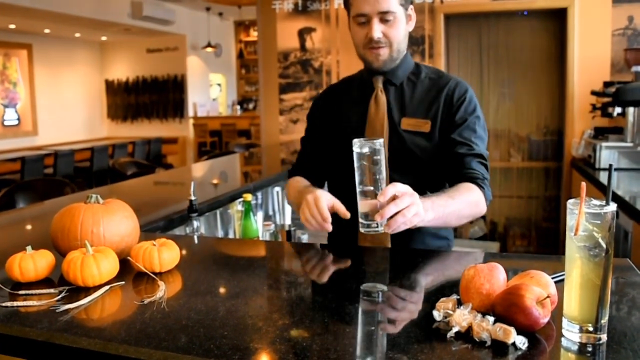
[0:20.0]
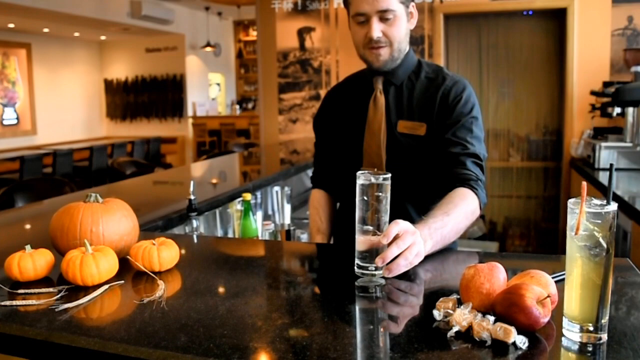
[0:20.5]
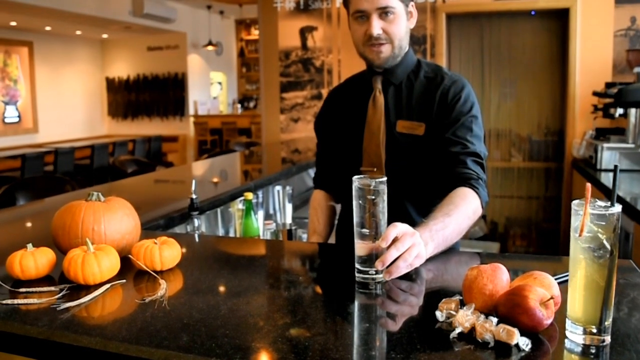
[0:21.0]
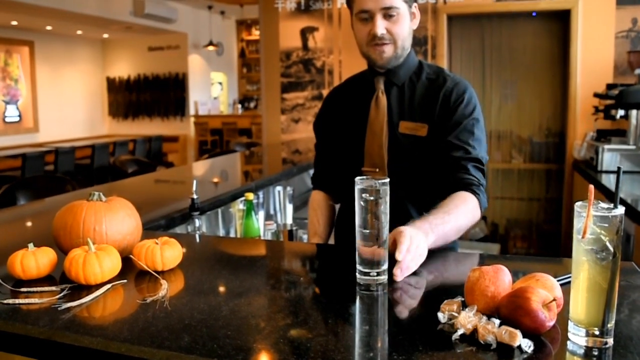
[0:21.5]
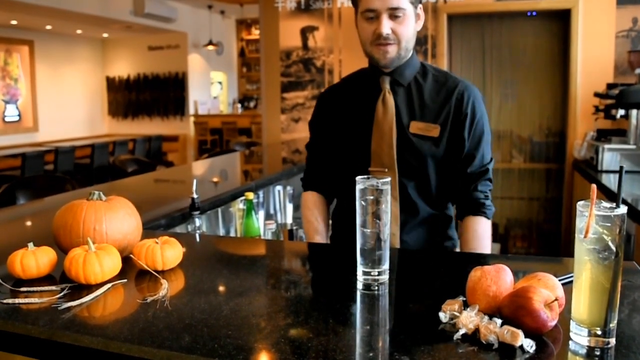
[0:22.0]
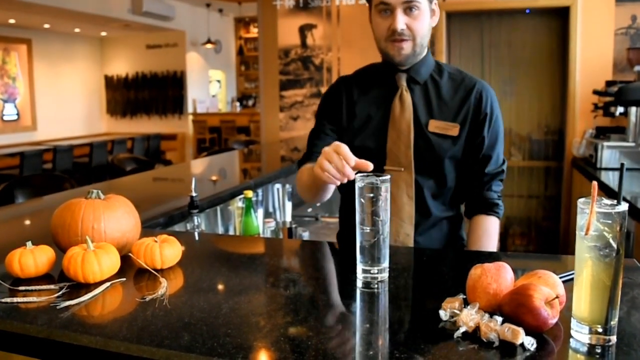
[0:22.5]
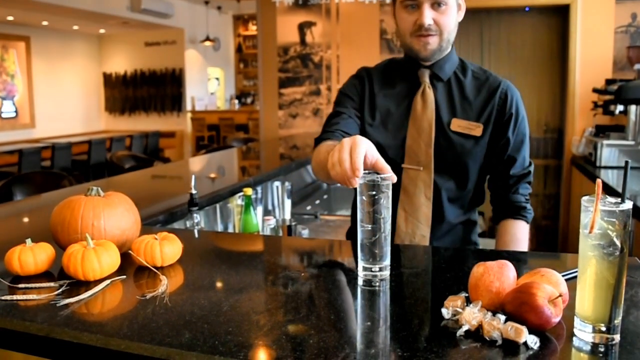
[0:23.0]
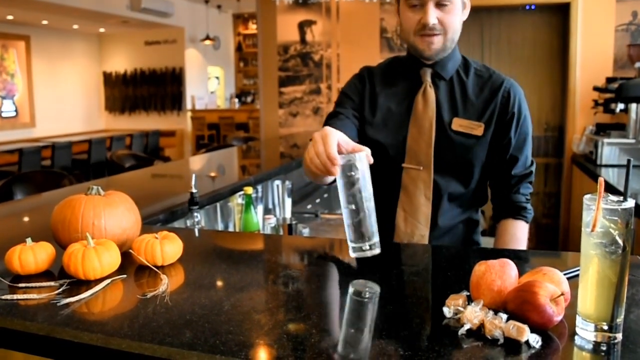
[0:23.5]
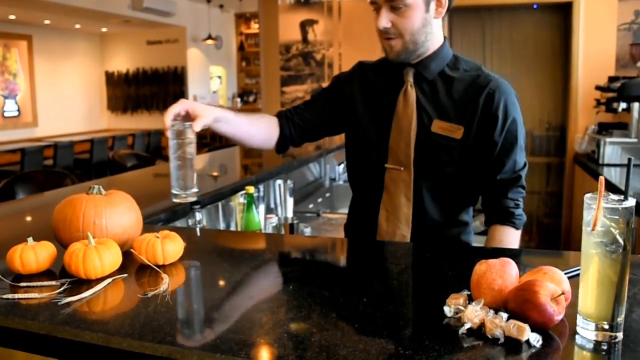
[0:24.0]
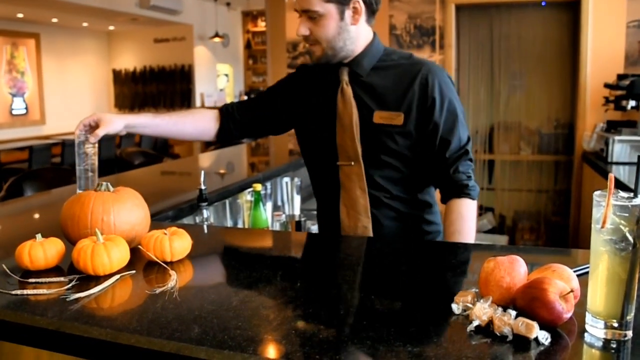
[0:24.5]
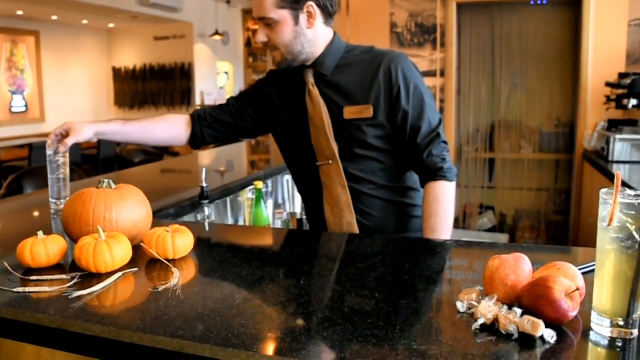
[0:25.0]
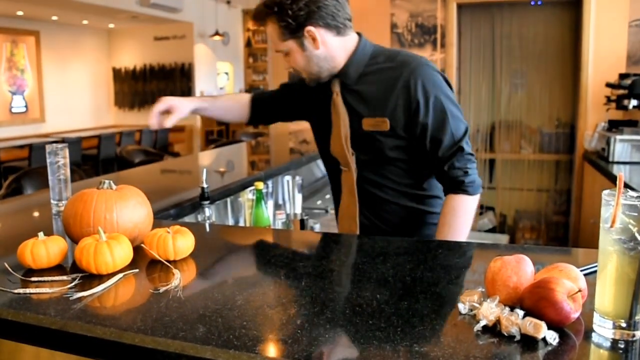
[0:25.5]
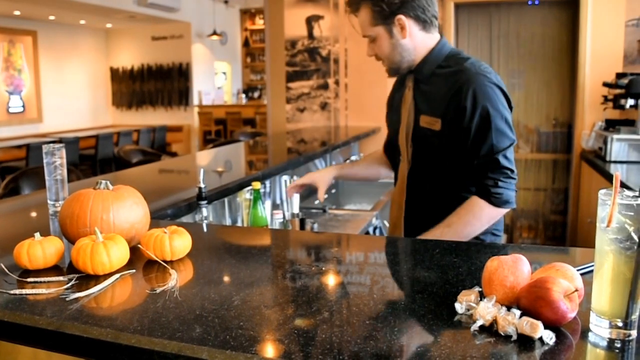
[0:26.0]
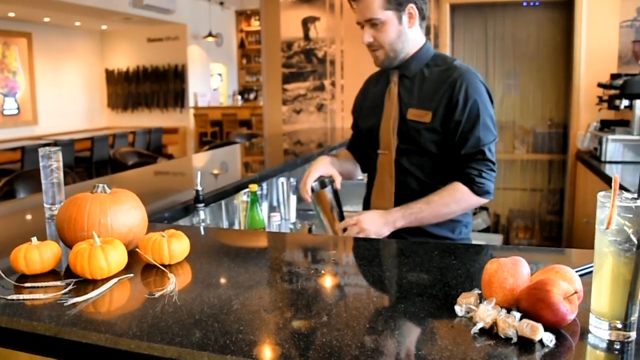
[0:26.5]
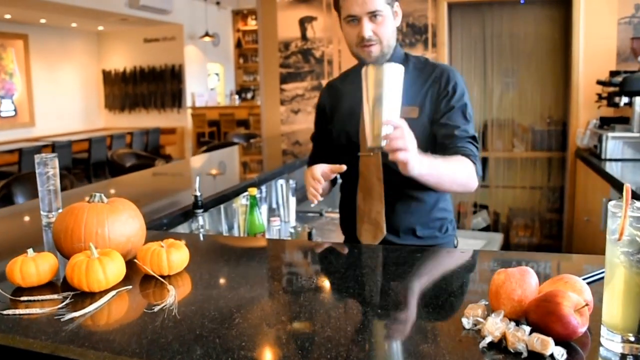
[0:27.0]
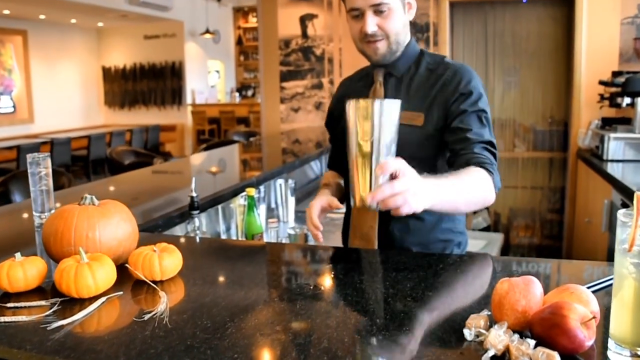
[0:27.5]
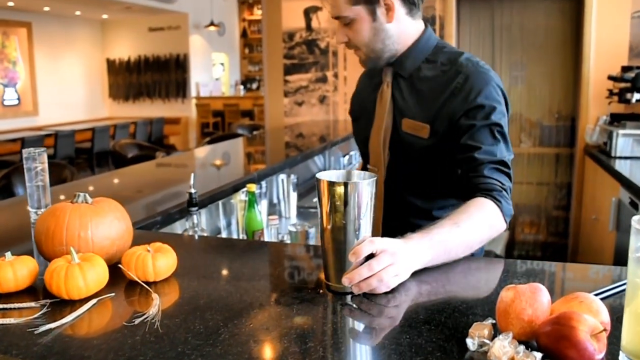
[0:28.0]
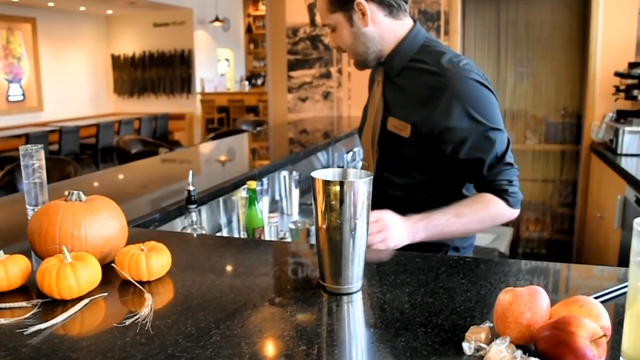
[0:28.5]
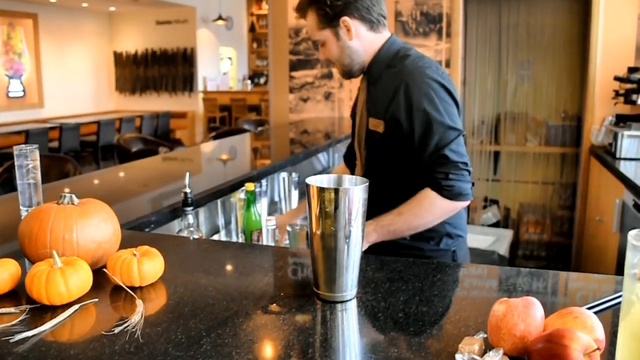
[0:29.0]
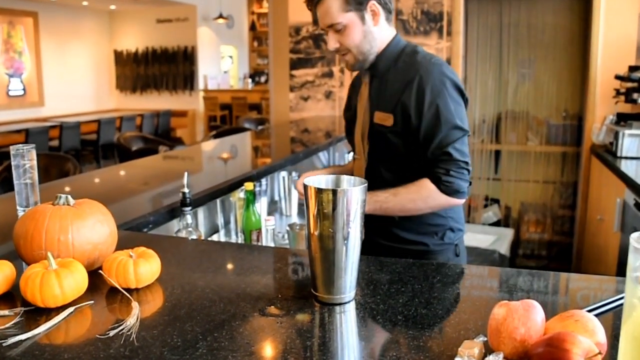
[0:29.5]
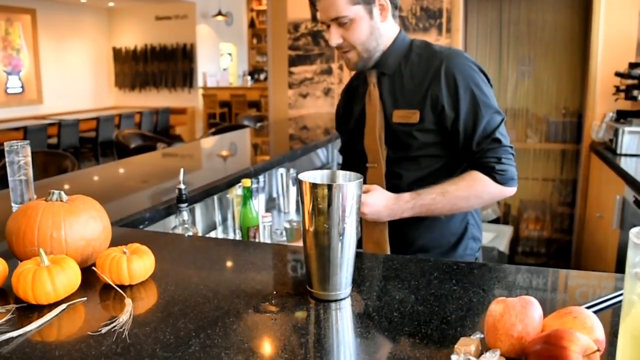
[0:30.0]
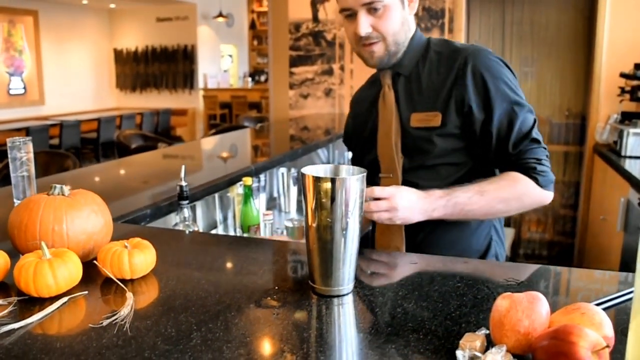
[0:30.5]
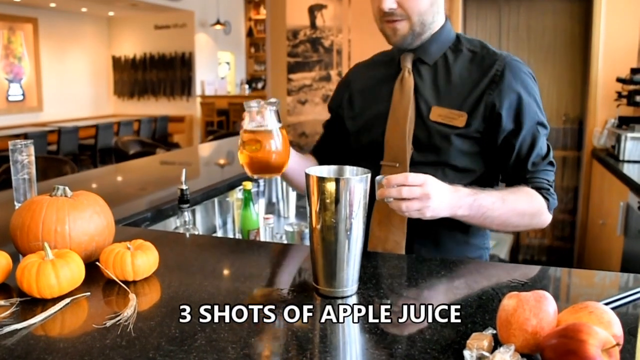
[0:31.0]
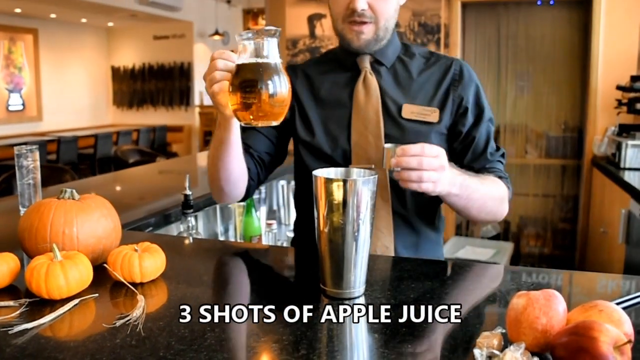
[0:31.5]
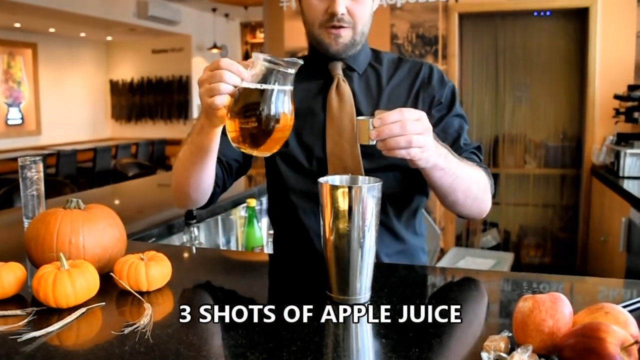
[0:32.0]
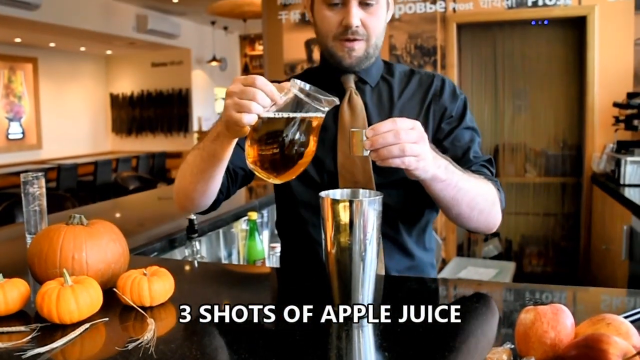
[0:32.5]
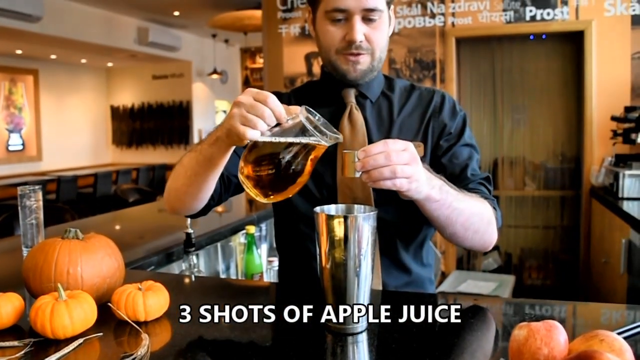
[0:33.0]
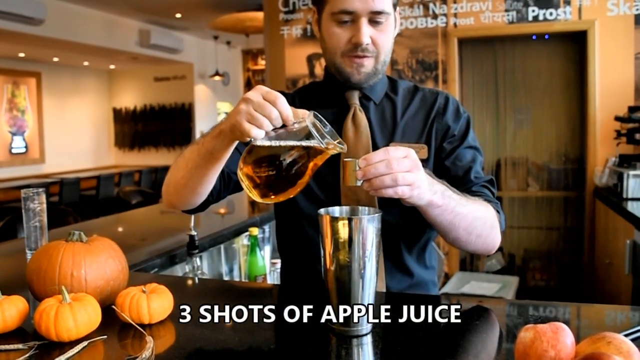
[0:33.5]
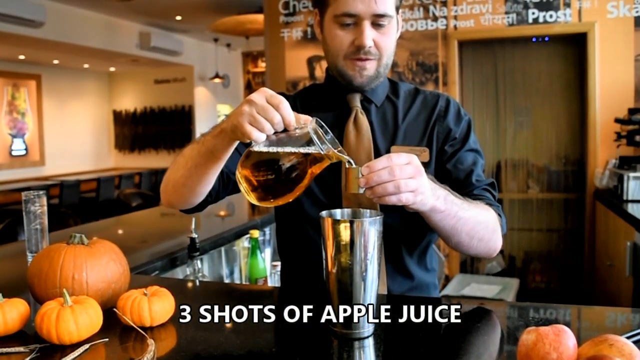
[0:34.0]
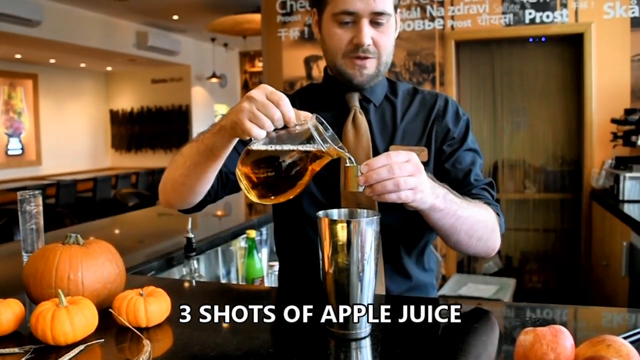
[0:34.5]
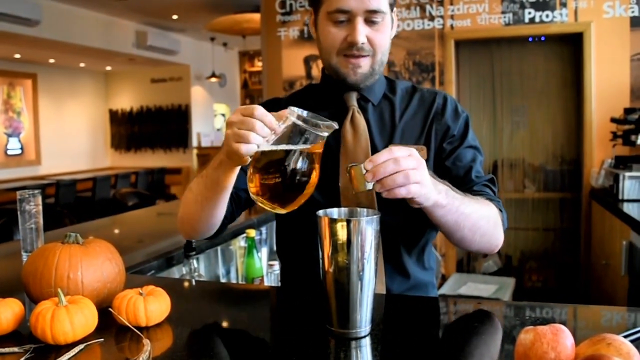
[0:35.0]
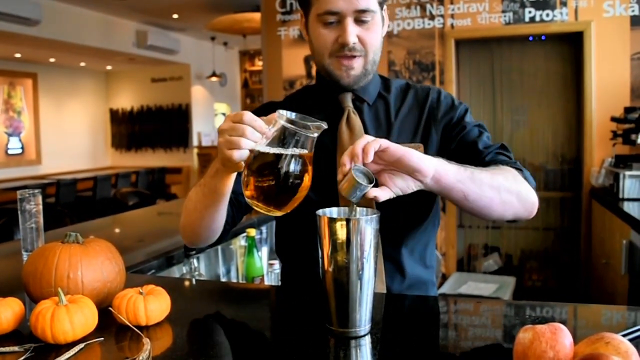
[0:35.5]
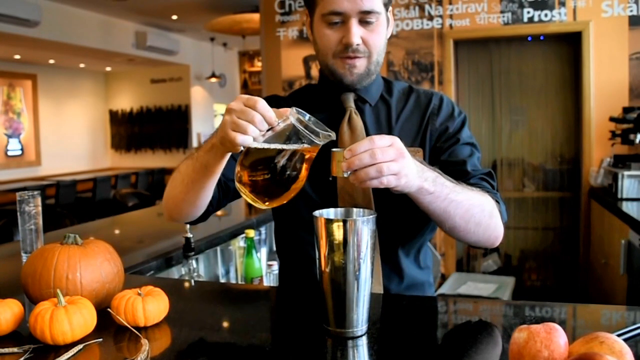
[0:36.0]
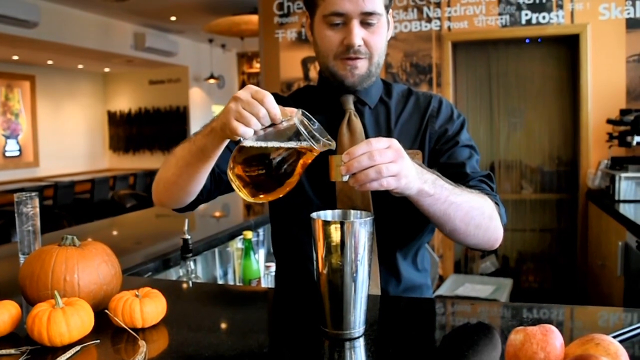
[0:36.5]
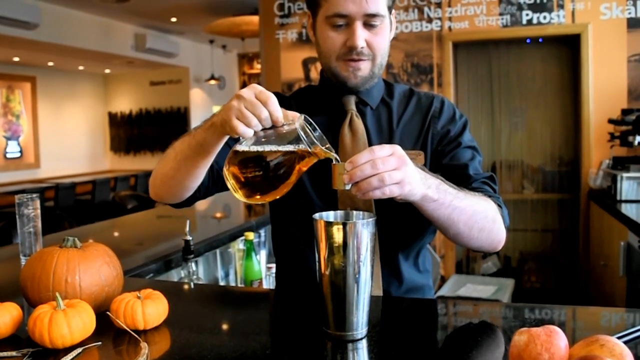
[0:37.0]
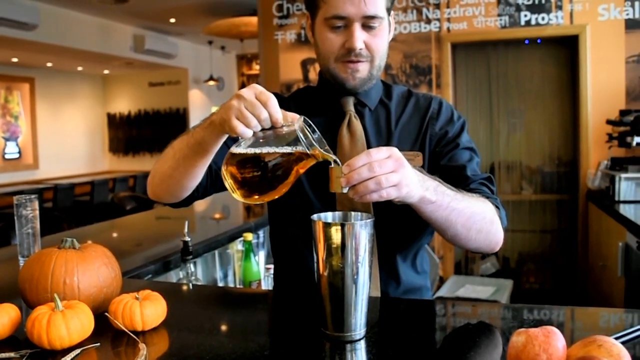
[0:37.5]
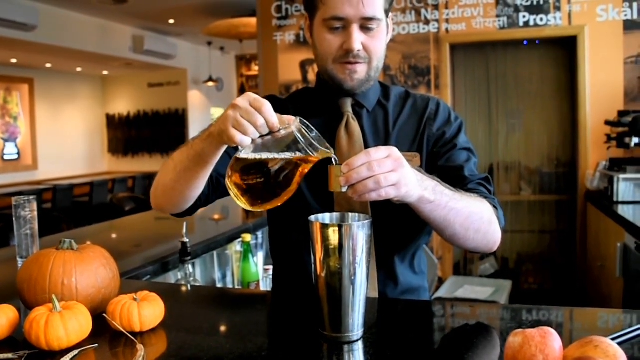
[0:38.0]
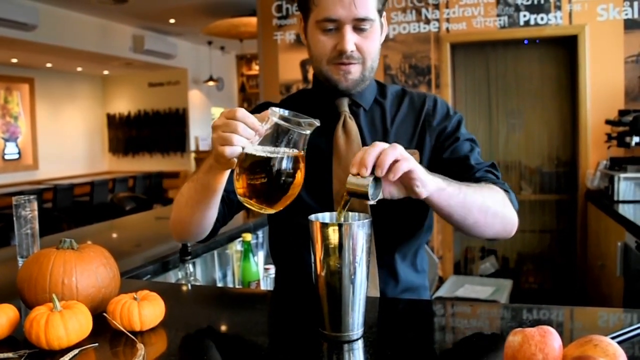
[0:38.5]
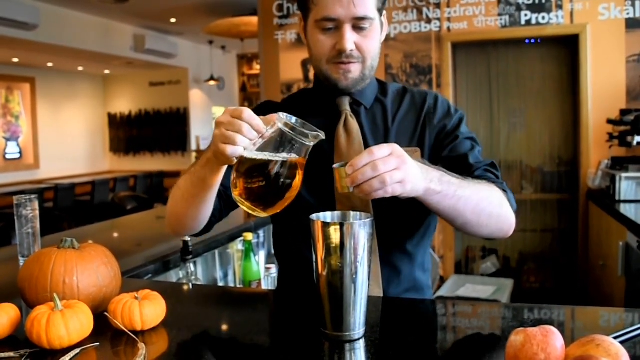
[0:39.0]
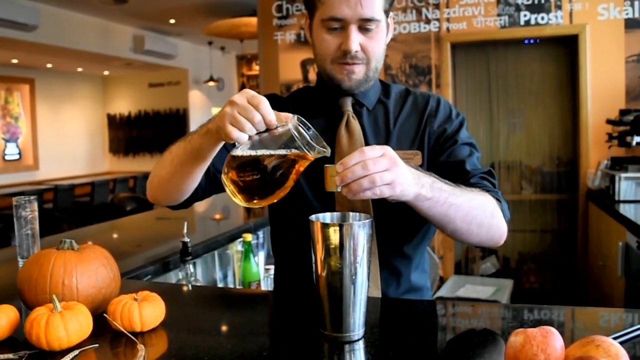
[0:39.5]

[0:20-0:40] The bartender, a Caucasian man in his mid-30s with dark eyes, dark hair and a short mustache and beard, wears a black long-sleeve shirt rolled up to his elbows and an orange tie for the Halloween theme. In his left hand he has a long, skinny glass. In front of him are pumpkins, one large and three smaller ones, on a black countertop, and another countertop goes around to his right. He has a glass full of clear liquid, possibly water, with ice, and moves it to the right side. He then has a large silver mixing cup.